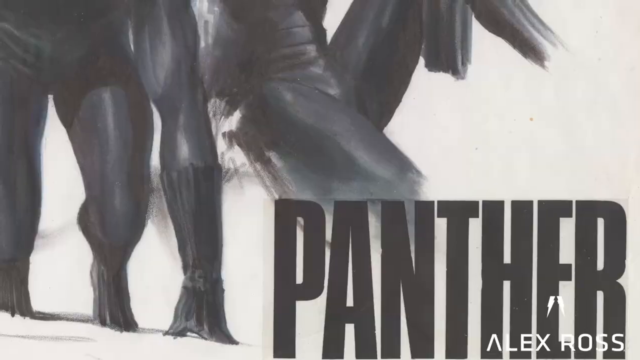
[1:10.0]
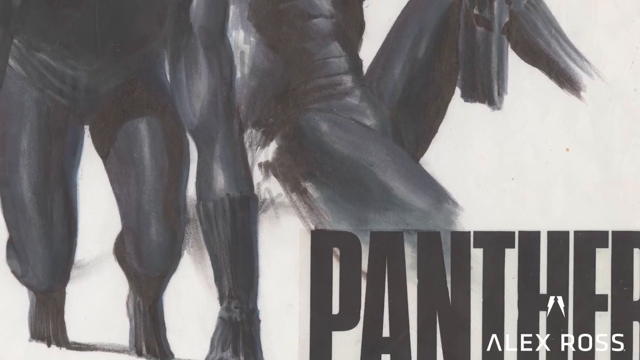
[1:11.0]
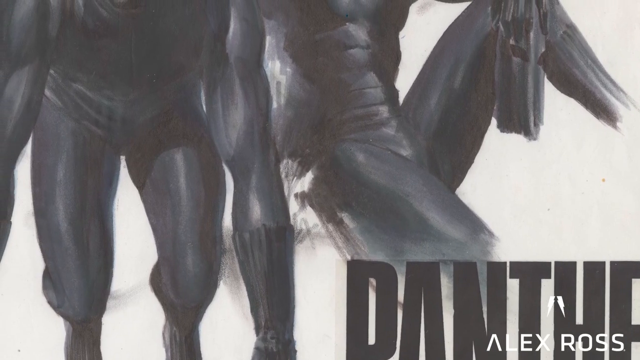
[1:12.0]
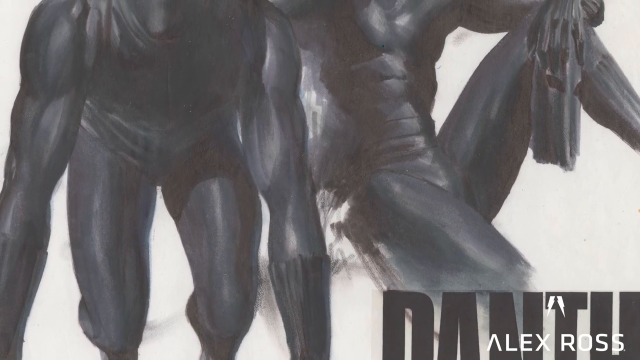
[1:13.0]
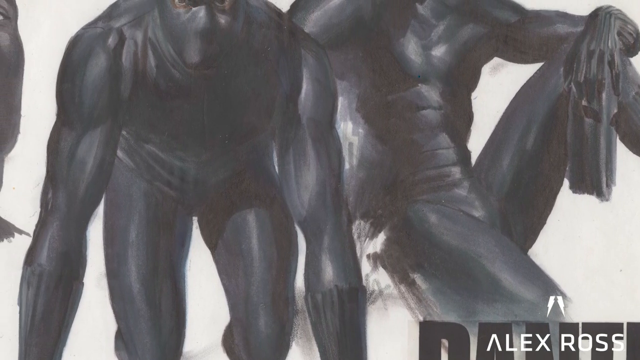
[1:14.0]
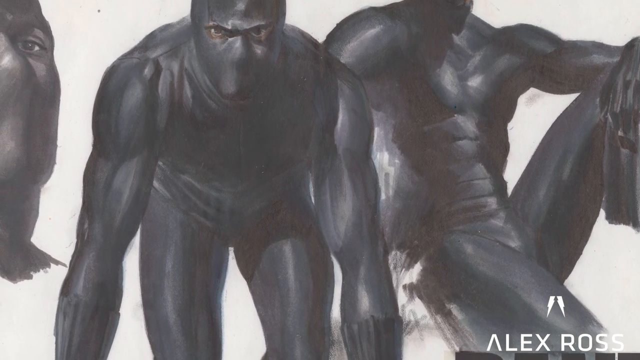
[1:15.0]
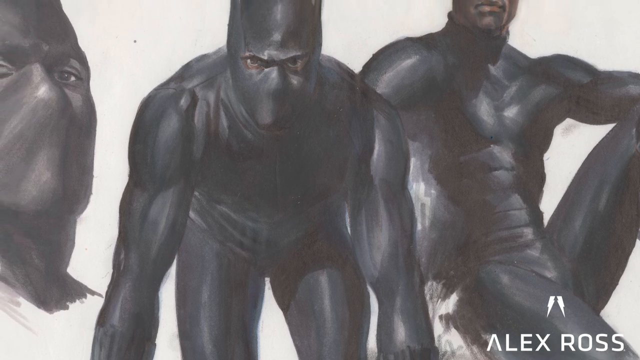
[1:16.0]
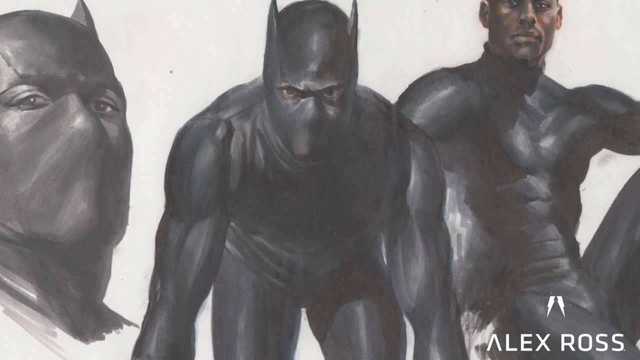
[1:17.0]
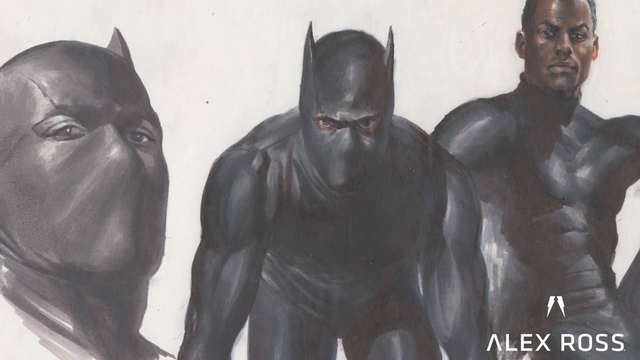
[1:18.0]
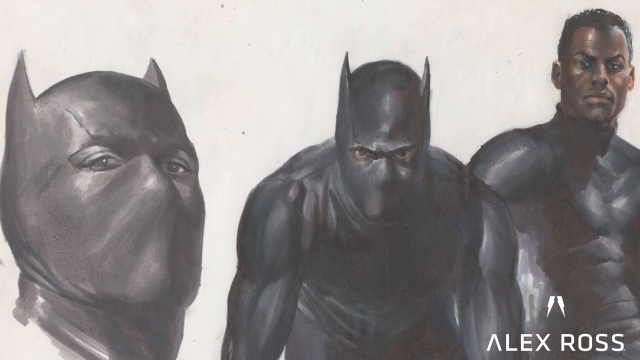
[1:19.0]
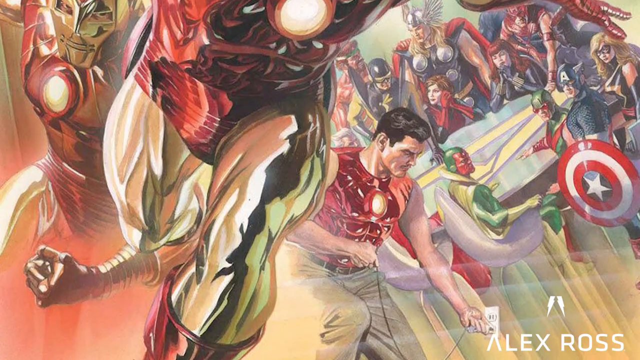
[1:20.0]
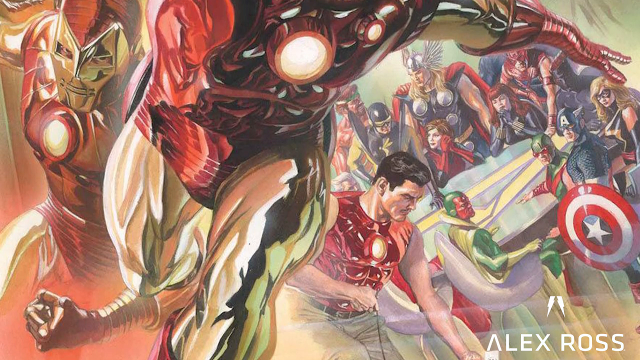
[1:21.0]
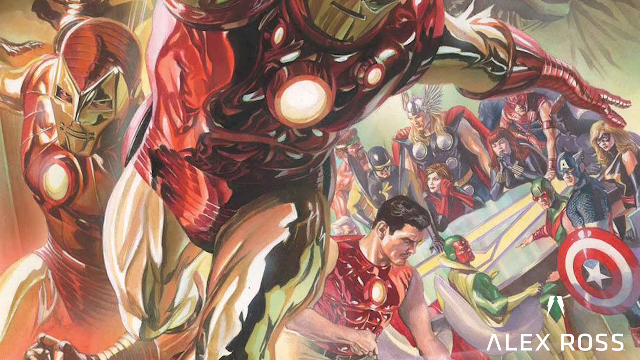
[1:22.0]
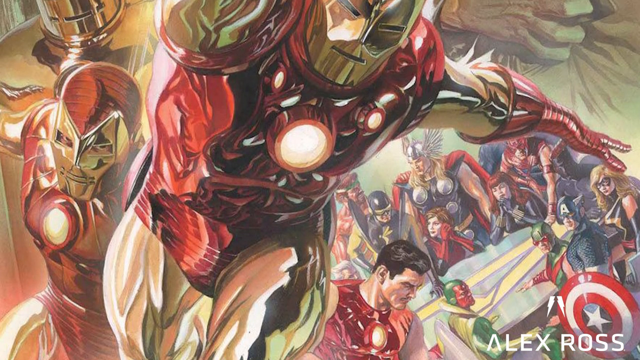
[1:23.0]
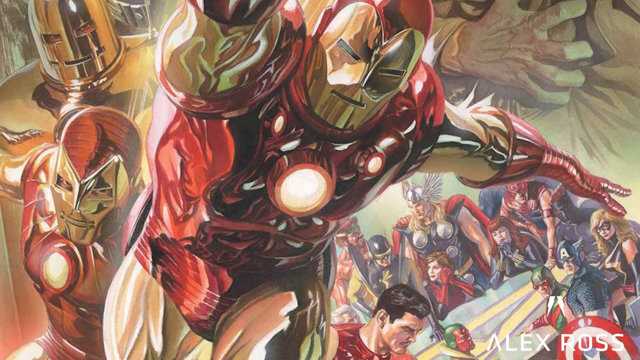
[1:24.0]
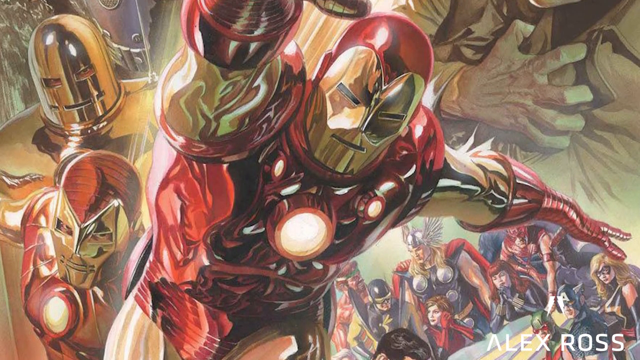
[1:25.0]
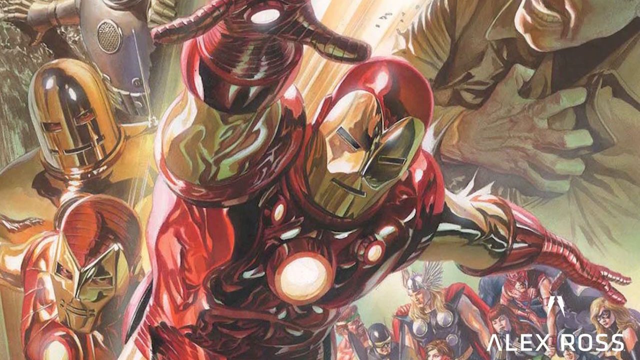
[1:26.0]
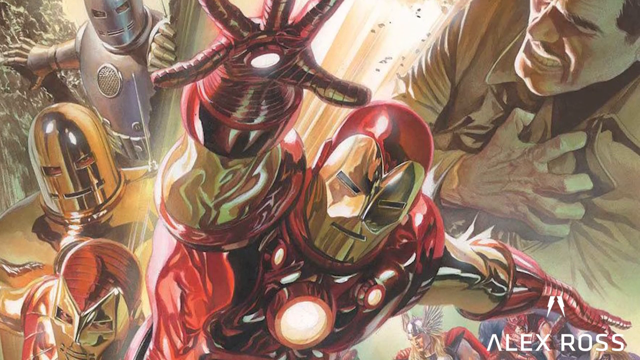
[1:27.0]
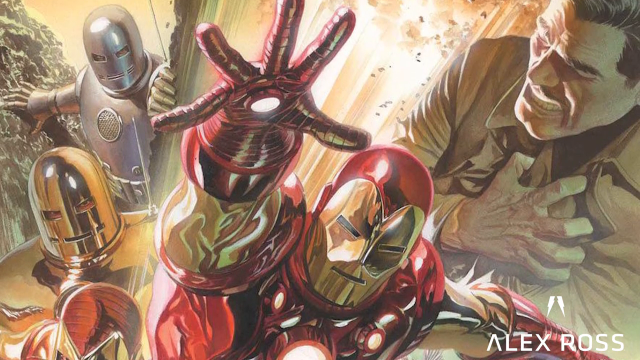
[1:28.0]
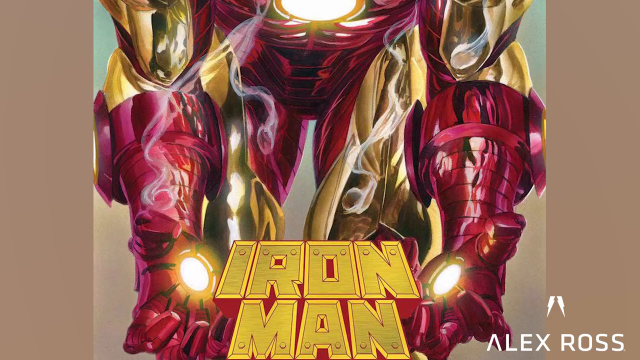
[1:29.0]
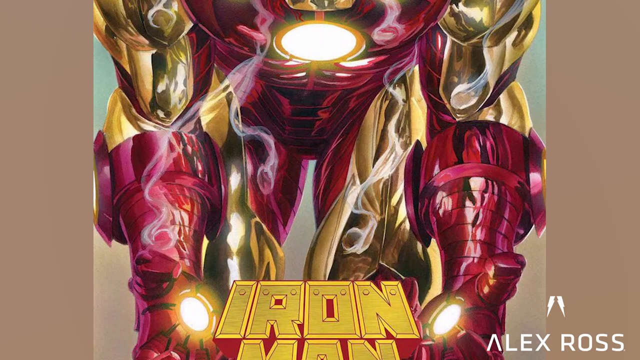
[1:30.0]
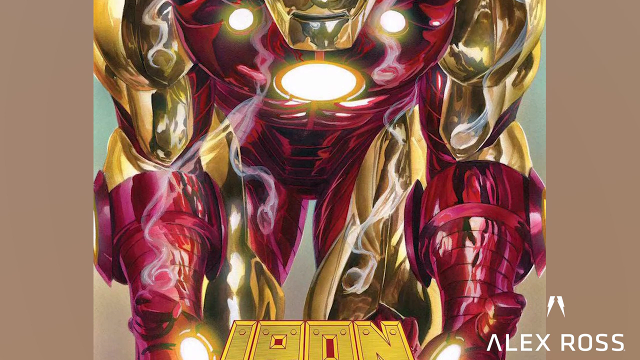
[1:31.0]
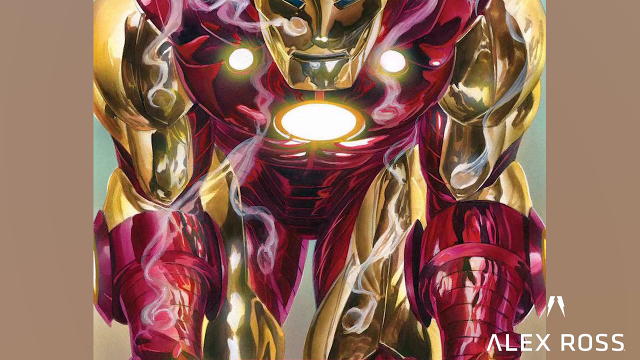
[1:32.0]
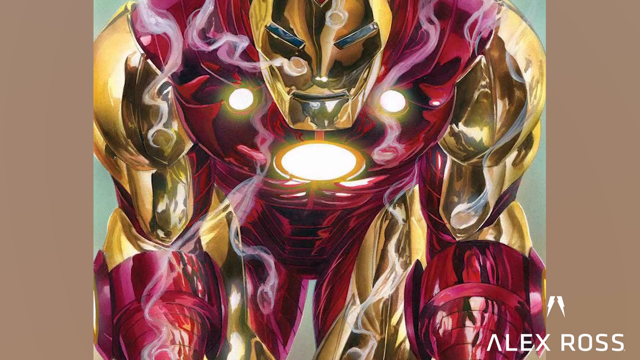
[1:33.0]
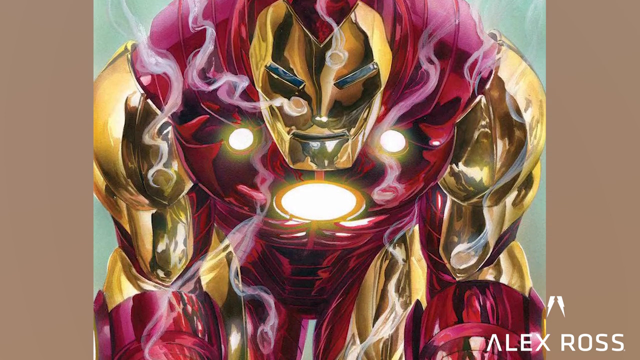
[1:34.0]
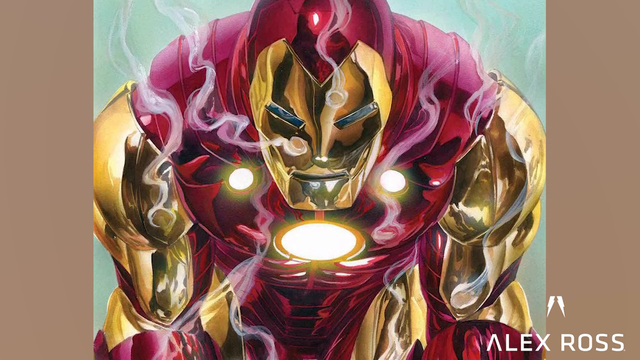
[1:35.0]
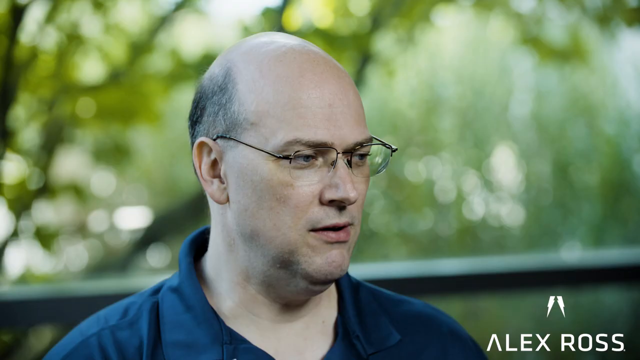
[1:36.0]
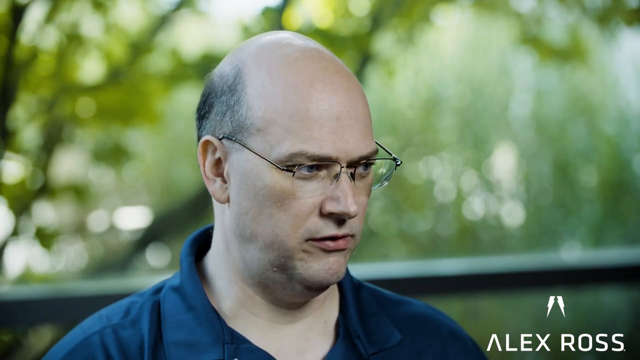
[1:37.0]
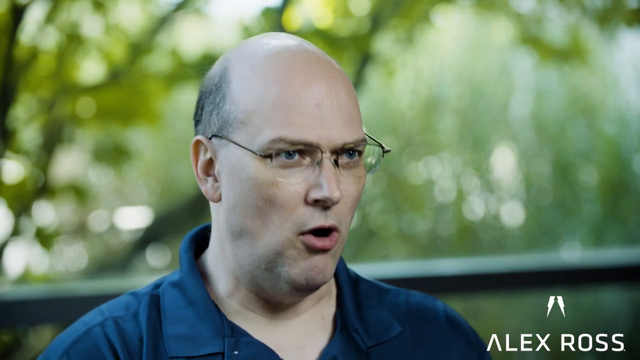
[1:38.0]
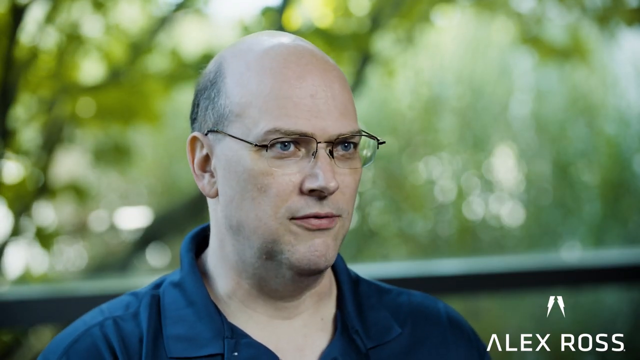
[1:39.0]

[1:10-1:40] The word "PANTHER" is at the bottom right of the screen in black capital letters, taking up almost half the height of the screen. The view moves along to the side, showing black figures; one has no mouth and wears a mask with ears at the top. More superheroes follow, including Iron Man with a circular light in the centre of his chest, a gold mask, and an outstretched hand that also has a lit-up circle on it. Another version of Iron Man appears in red and gold with circular lights: one on his chest and two above it, on either side. The balding man is then seen speaking to the camera again, wearing glasses, with trees behind him. He has some hair just at the bottom of his head, and his glasses have a black frame across the top and are wire-rimmed throughout. Behind him is a horizontal line, with faded-out trees behind that.